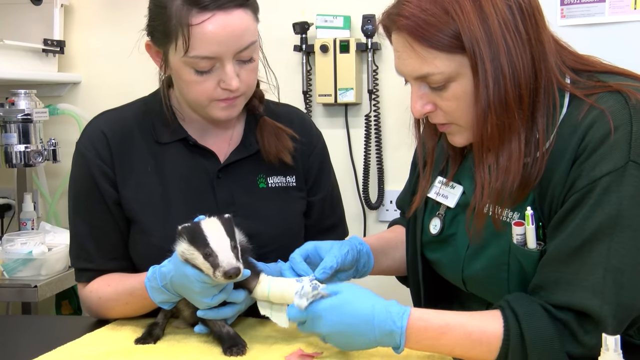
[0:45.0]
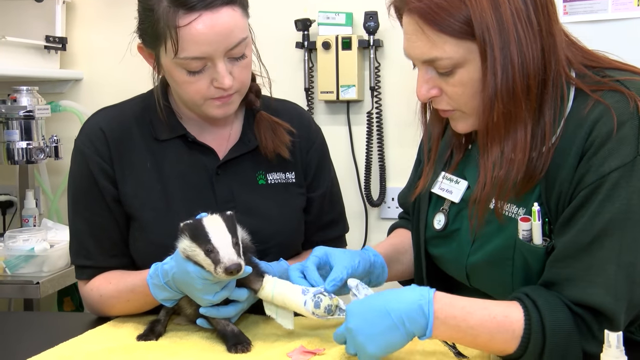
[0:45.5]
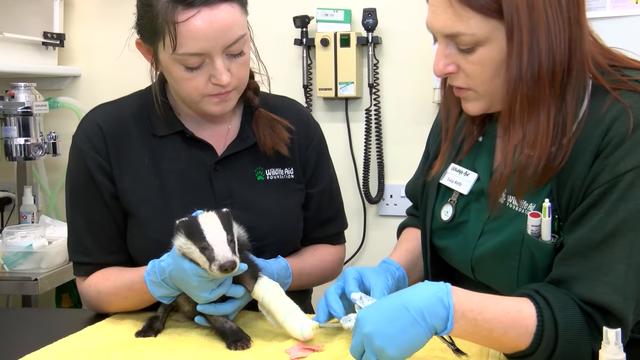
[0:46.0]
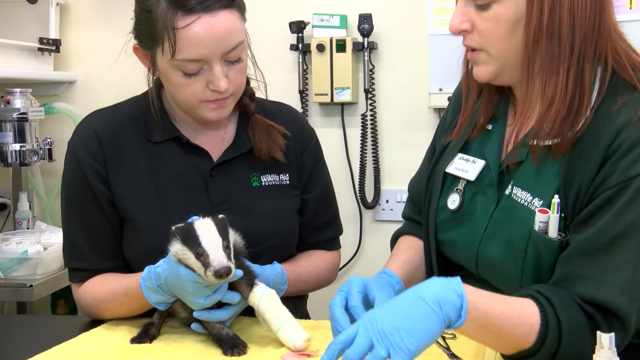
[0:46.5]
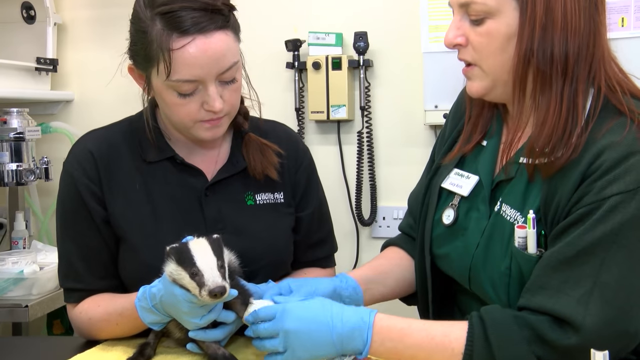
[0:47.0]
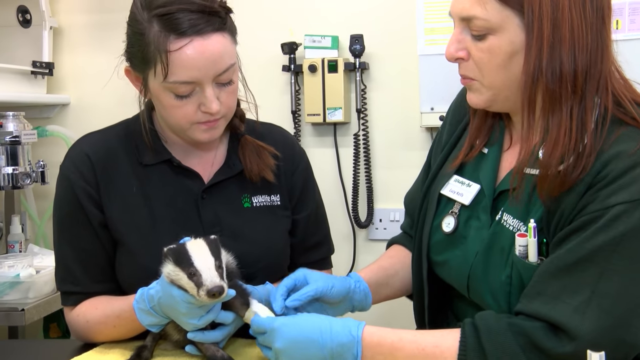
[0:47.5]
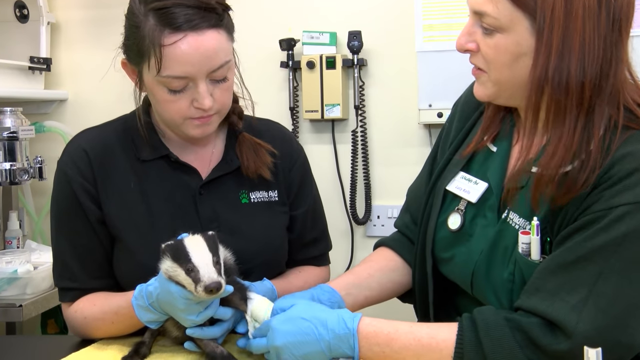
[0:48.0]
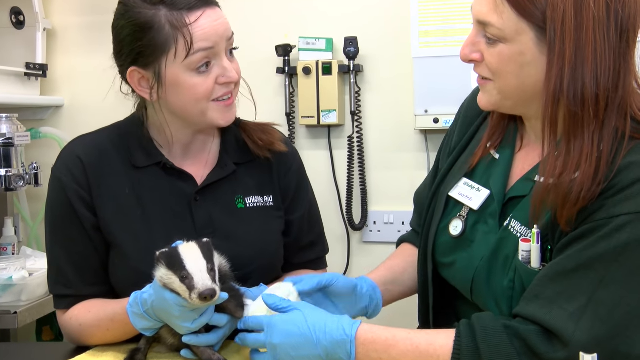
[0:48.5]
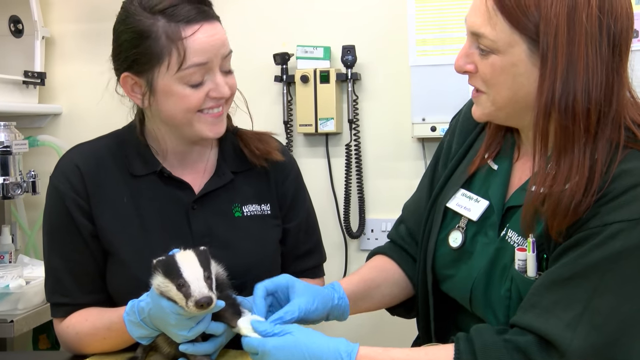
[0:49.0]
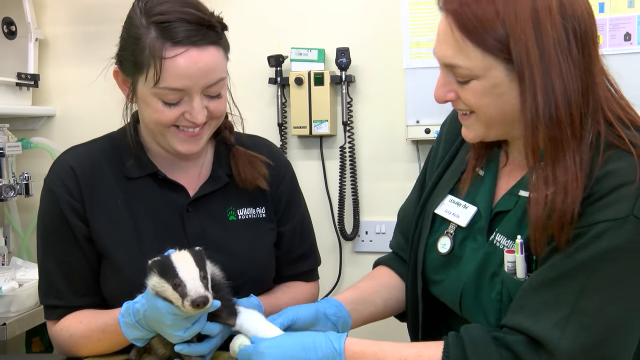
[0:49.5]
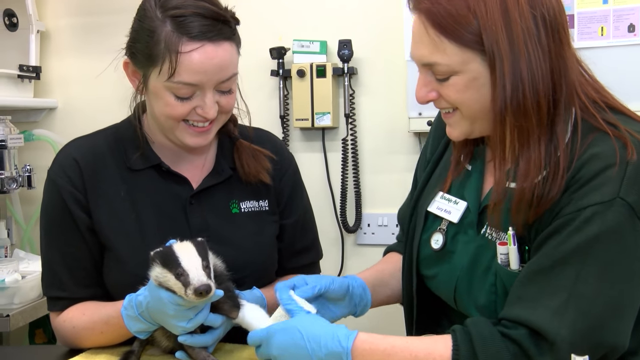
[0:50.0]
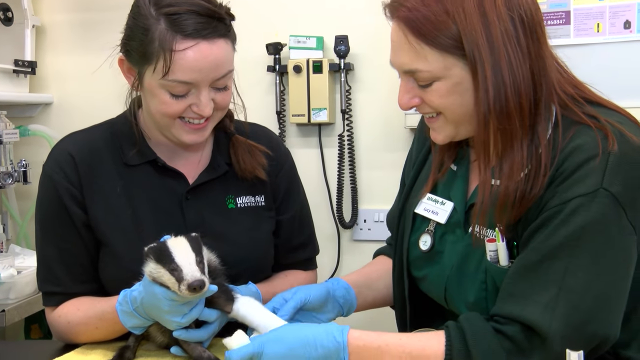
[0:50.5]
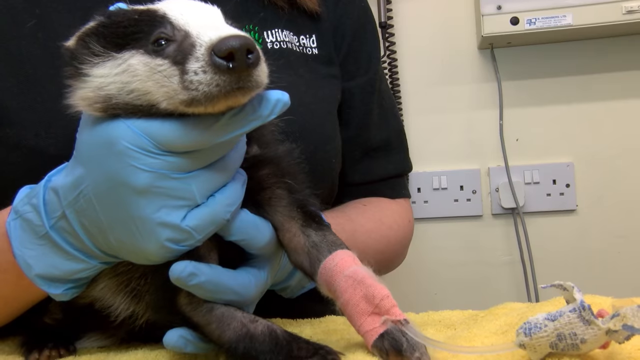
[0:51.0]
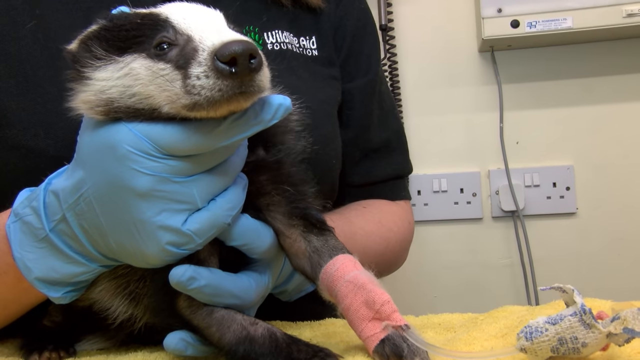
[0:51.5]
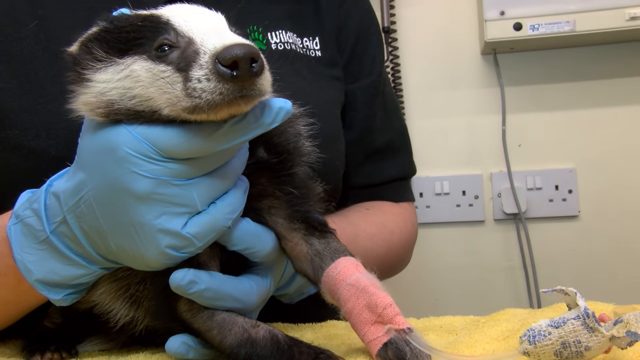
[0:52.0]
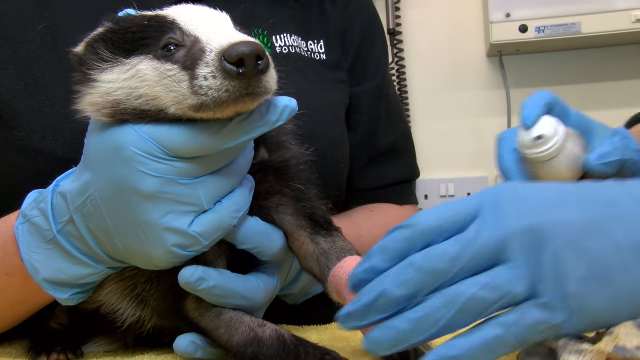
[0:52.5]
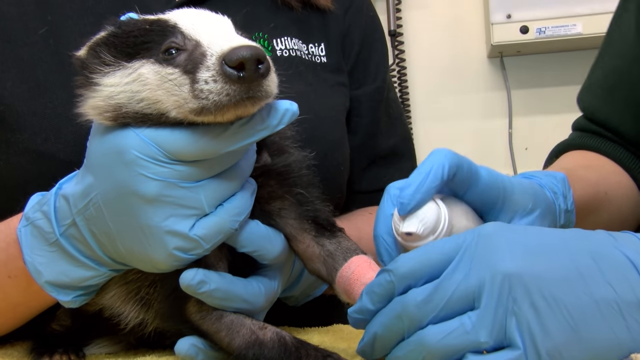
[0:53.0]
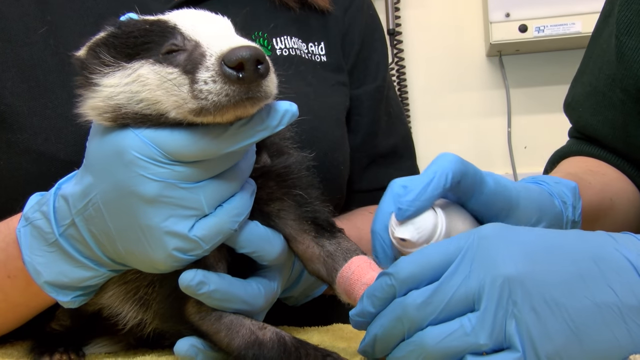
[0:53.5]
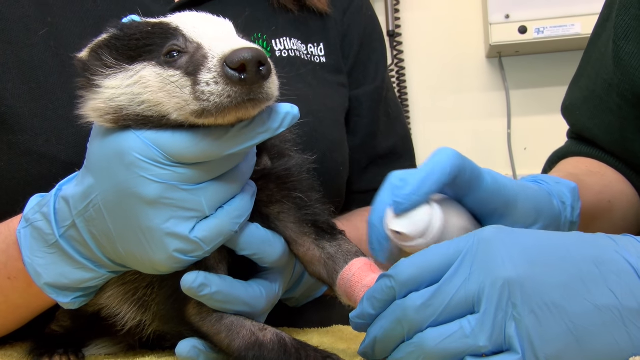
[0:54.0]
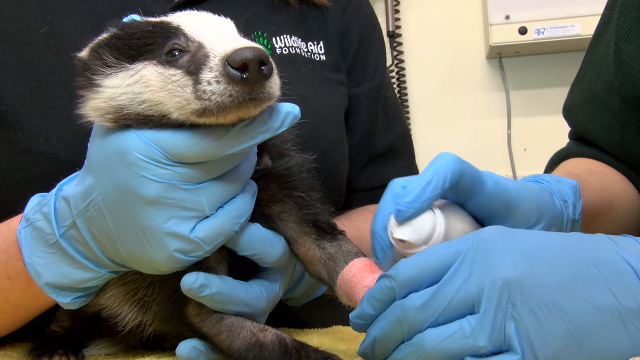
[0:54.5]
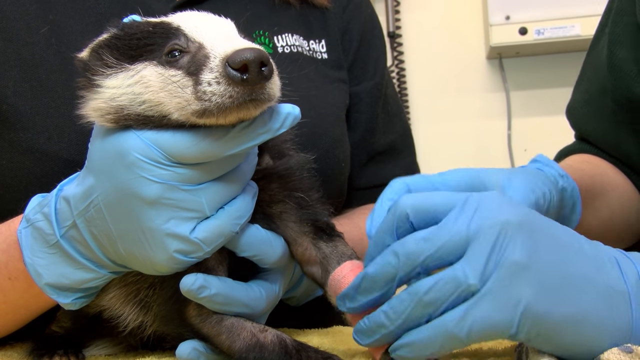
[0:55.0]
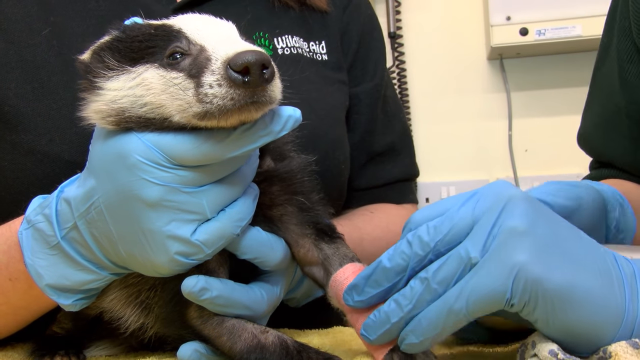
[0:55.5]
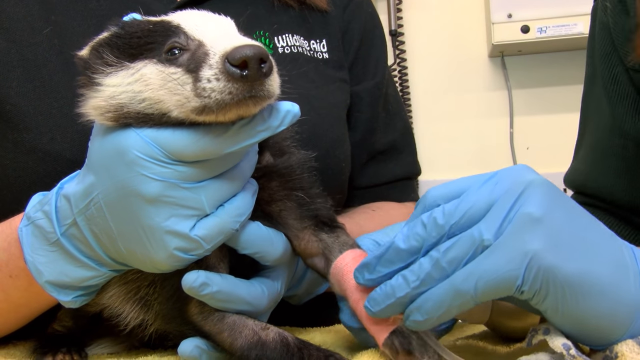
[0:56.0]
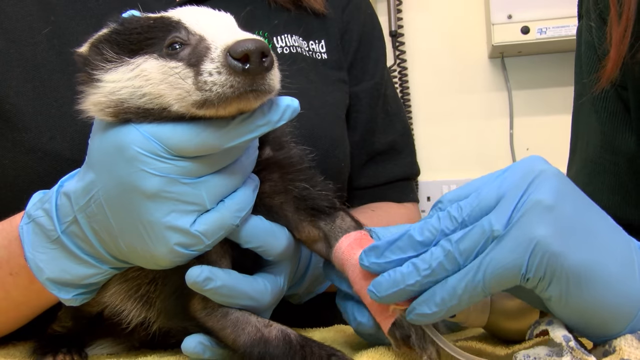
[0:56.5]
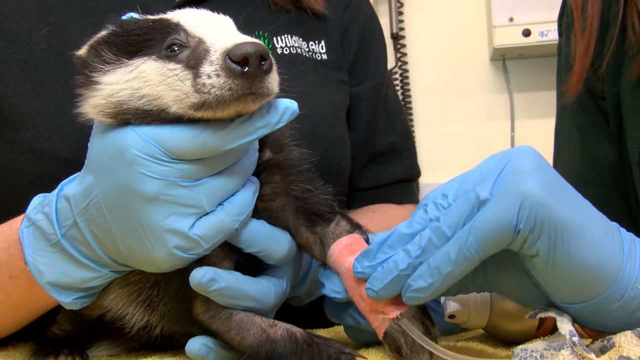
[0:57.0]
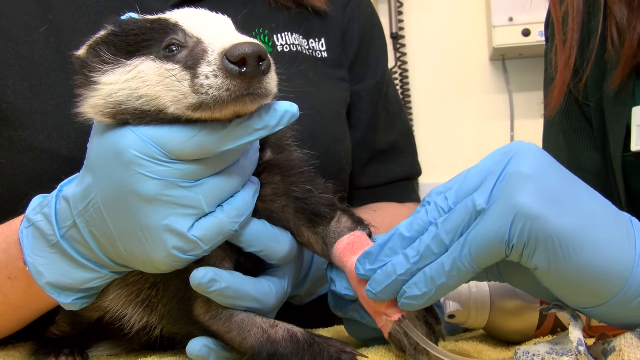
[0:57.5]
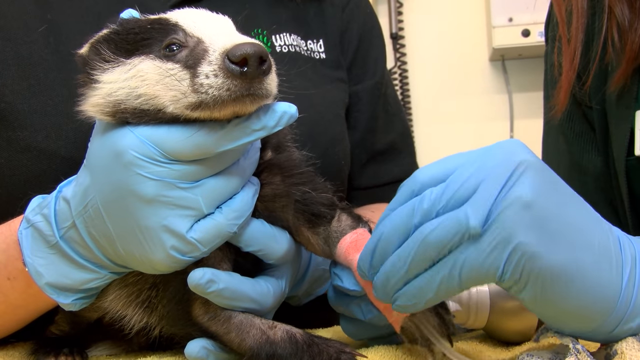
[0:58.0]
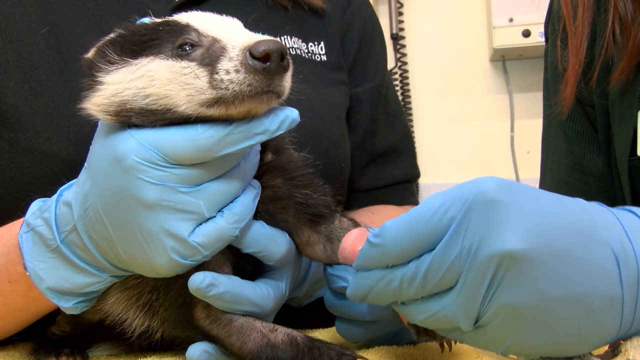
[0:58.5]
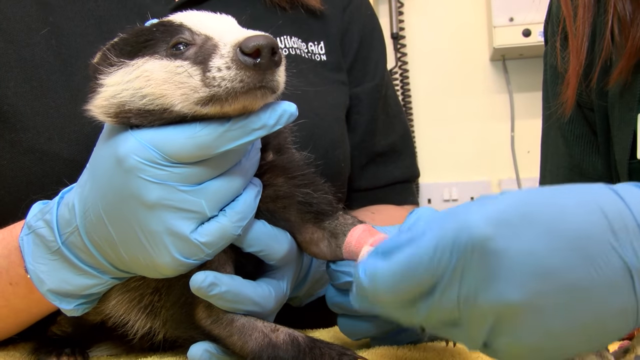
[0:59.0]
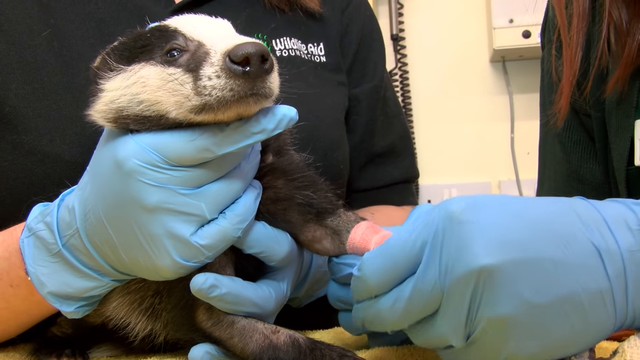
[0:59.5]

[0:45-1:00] The women carefully take off the badger's cast, unrolling it. With the cast off, she takes off the pink band-aid. The badger is very calm and does not move around while the woman in the black shirt holds onto him; he looks to be a young pup. There is a clear tube under the pink bandage that looks to be connected to something like a clear box. There is equipment in the background.